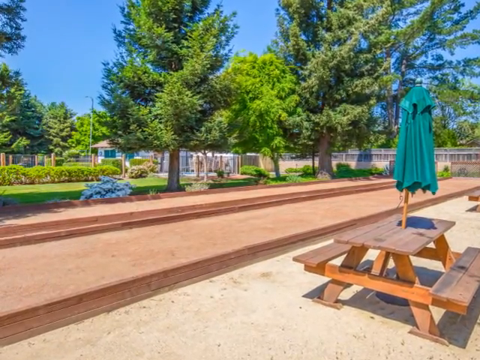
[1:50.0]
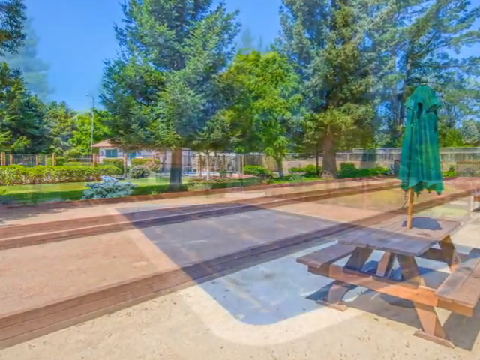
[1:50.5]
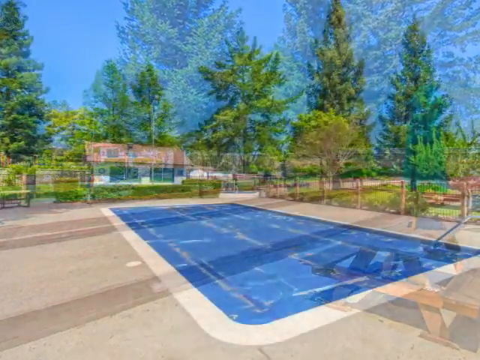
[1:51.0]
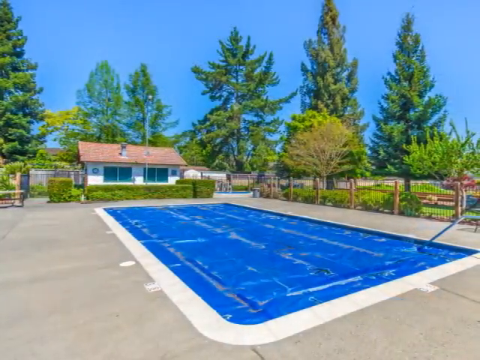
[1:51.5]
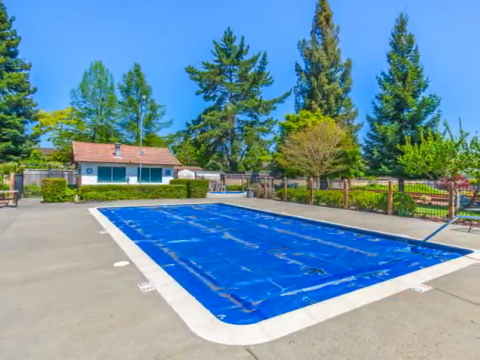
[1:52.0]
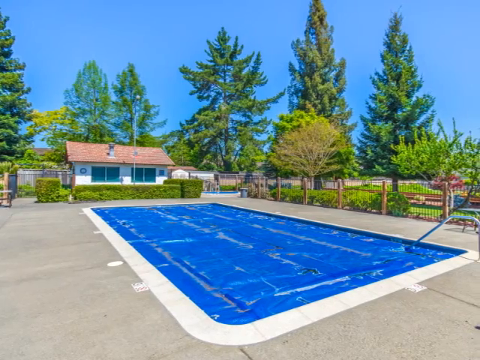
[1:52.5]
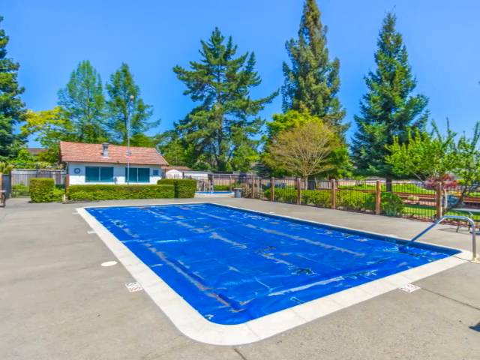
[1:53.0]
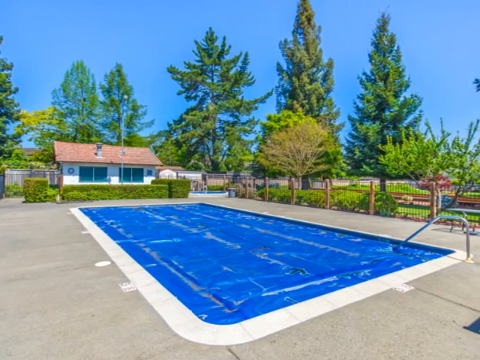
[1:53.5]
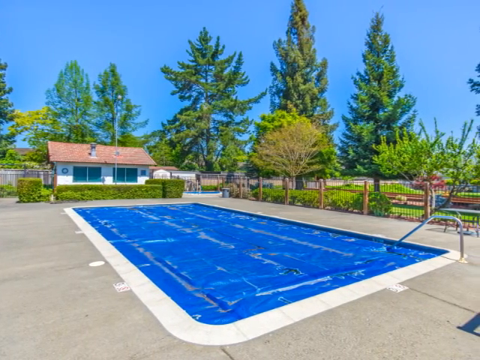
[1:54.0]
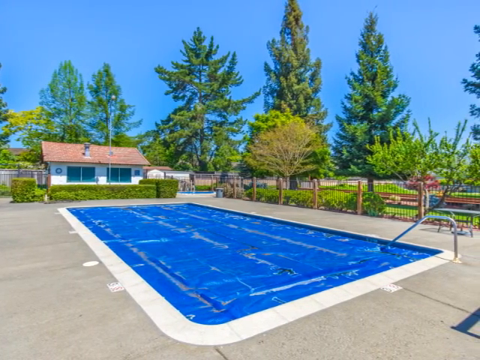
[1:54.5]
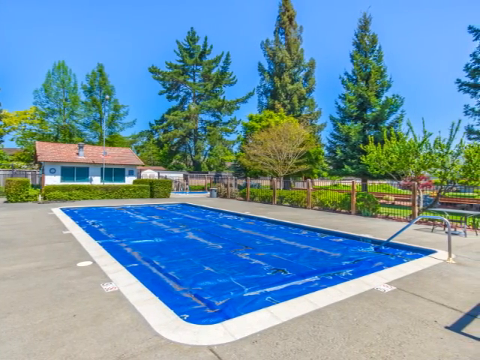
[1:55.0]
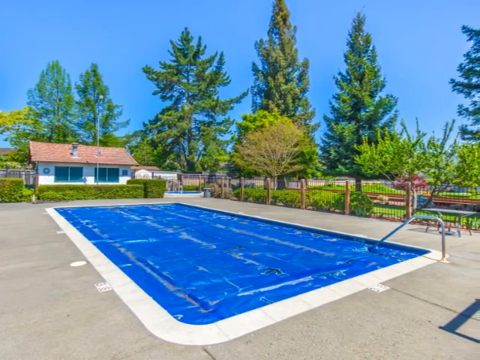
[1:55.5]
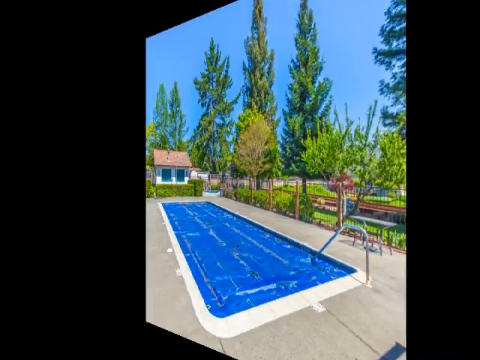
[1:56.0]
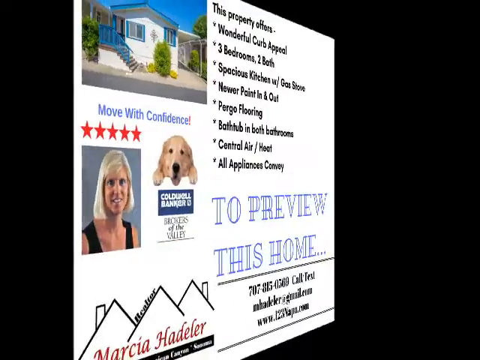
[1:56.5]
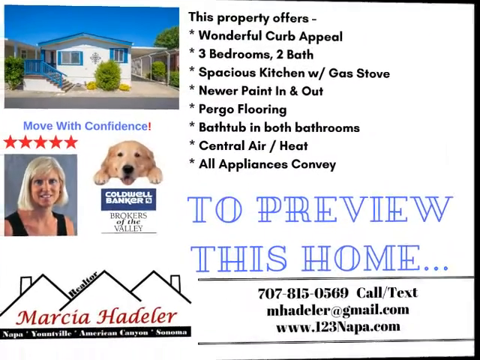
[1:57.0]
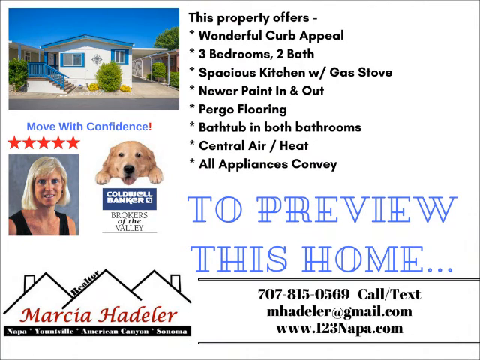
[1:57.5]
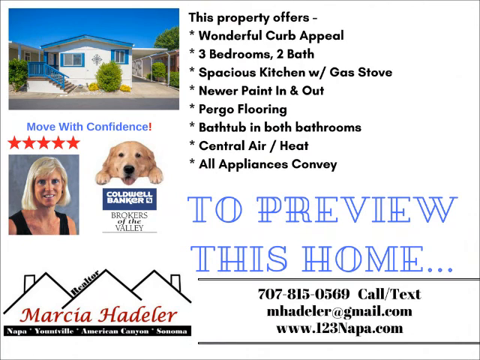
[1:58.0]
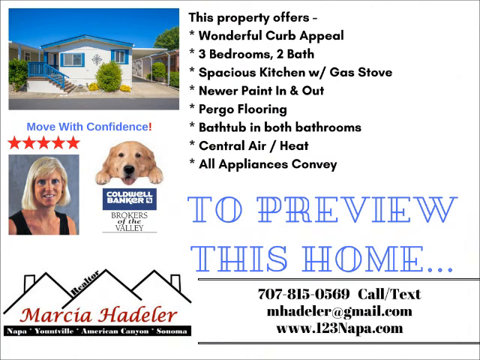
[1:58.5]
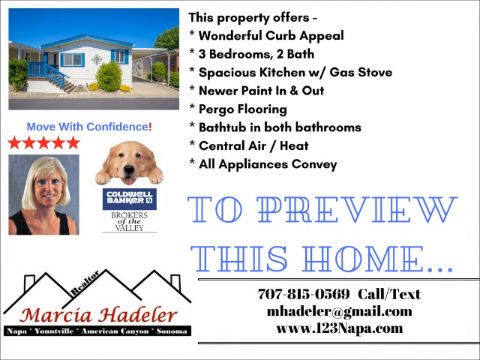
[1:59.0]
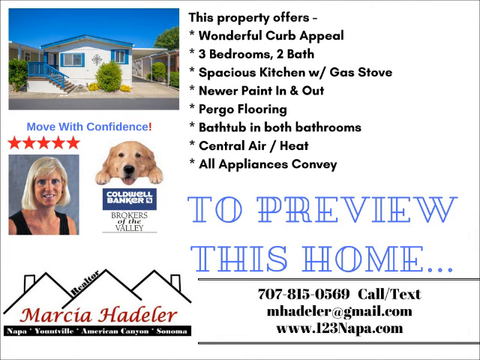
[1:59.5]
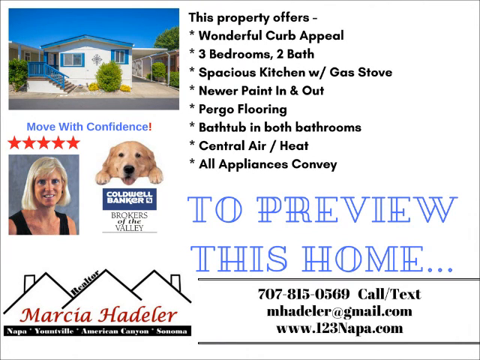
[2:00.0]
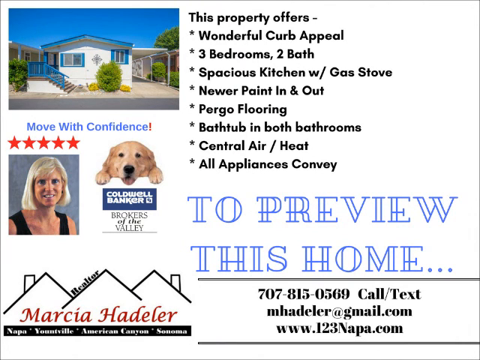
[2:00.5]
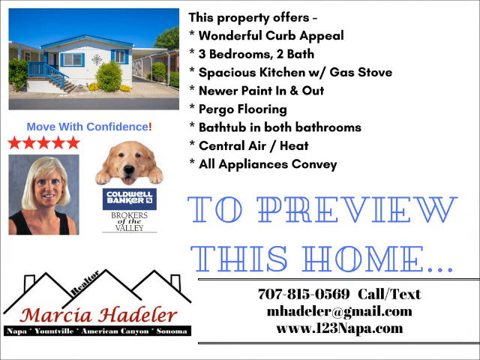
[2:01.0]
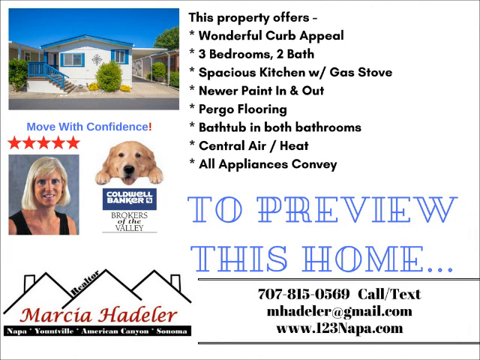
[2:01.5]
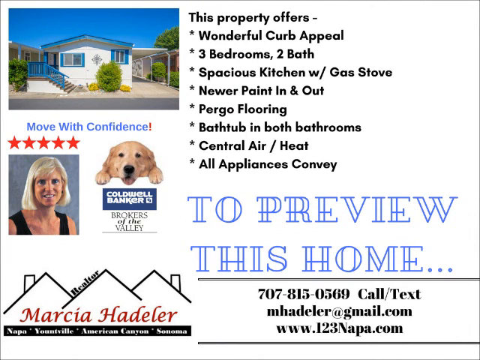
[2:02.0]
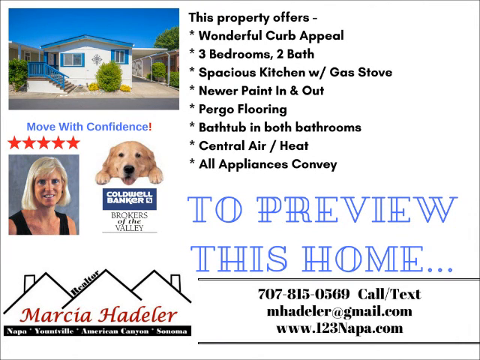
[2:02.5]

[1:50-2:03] The pool area is shown: it appears to be a very large, gated pool with many trees lining the outside and some bushes. The water appears to be covered. There are large trees in the background. The camera pans from left to right, then information about the property appears, reading "this property offers wonderful curb appeal, 3 bedrooms, 2 baths, spacious kitchen with gas stove, newer paint in and out, pergola flooring, a bathtub in both bathrooms, central air and heat, all appliances conveyed." Information follows about Marcia Hadler, with her phone number, email address and a website for more information. It says she works for Coldwell Bankers, a broker of the valley, and she looks to have a 5-star rating. The pamphlet also shows an image of the outside of the building, with several stairs up on the left-hand side, two windows in the front, and several bushes.